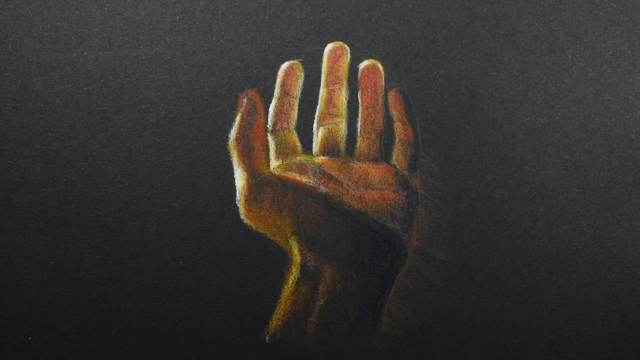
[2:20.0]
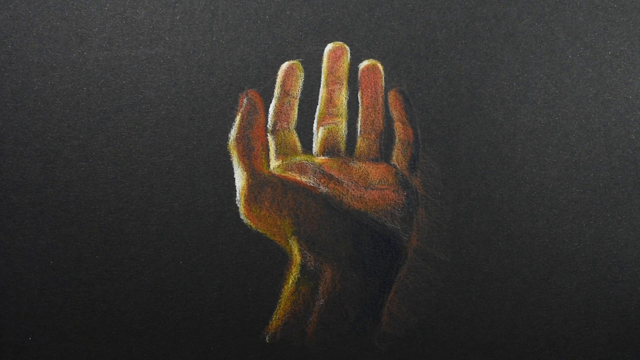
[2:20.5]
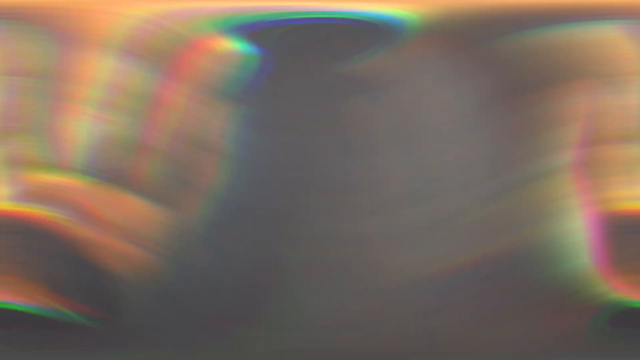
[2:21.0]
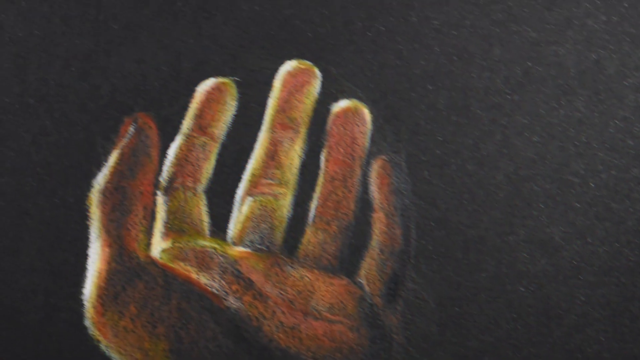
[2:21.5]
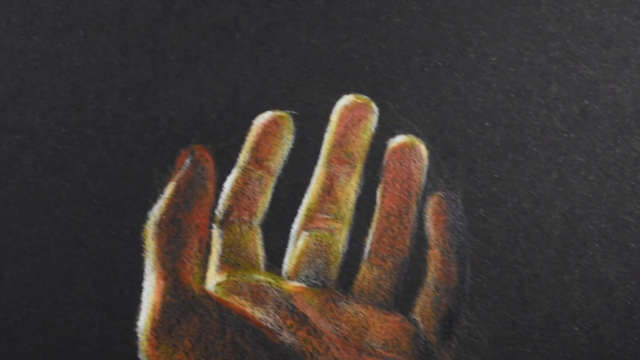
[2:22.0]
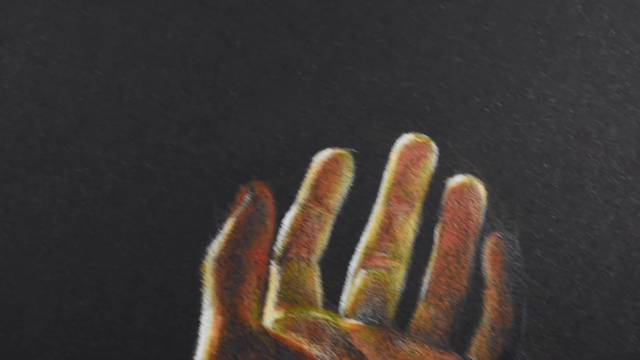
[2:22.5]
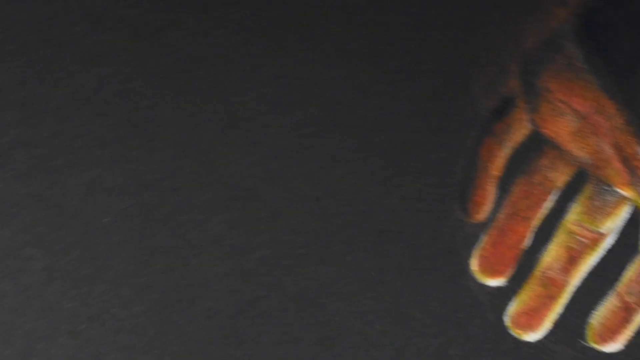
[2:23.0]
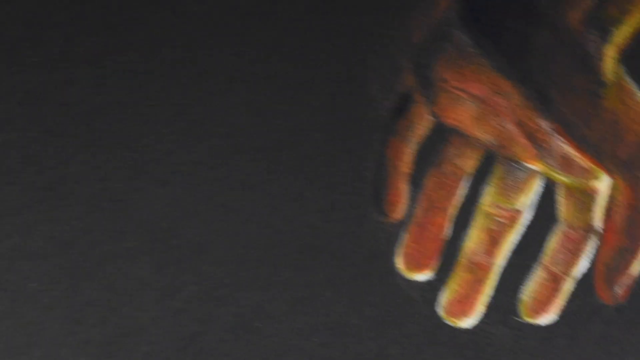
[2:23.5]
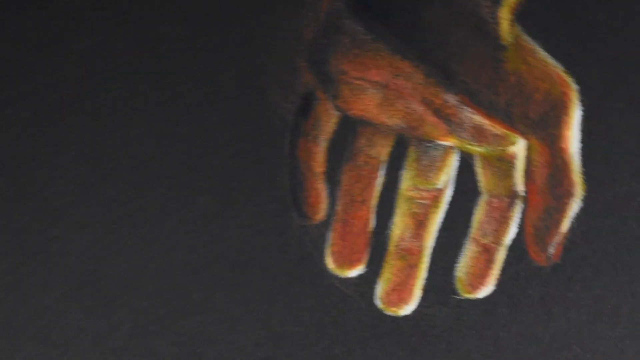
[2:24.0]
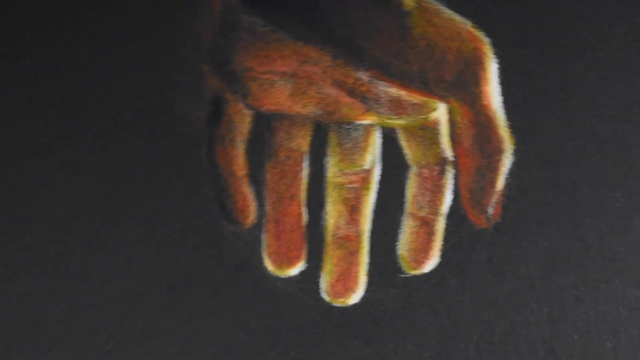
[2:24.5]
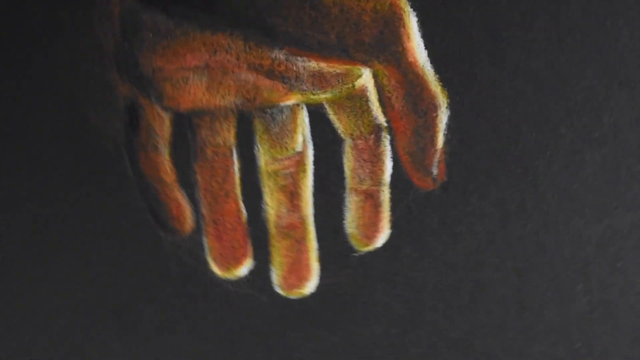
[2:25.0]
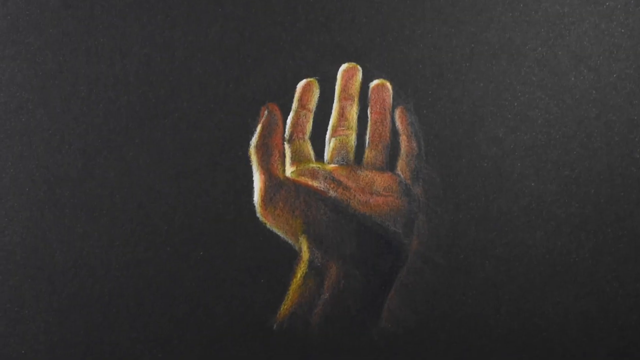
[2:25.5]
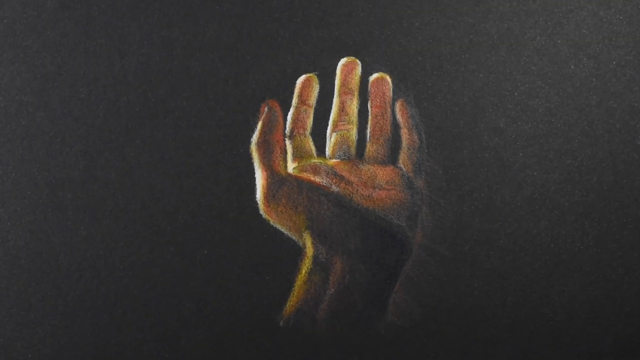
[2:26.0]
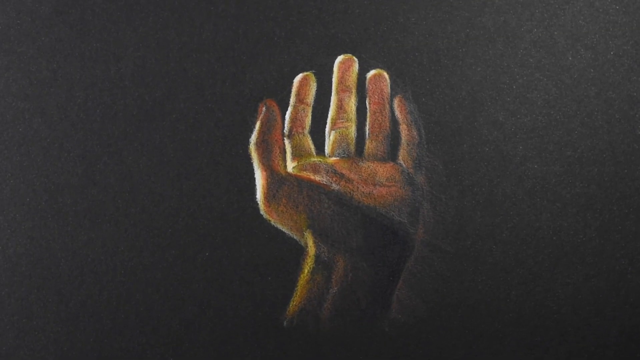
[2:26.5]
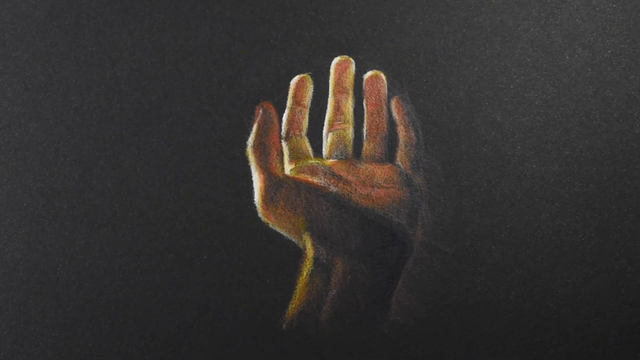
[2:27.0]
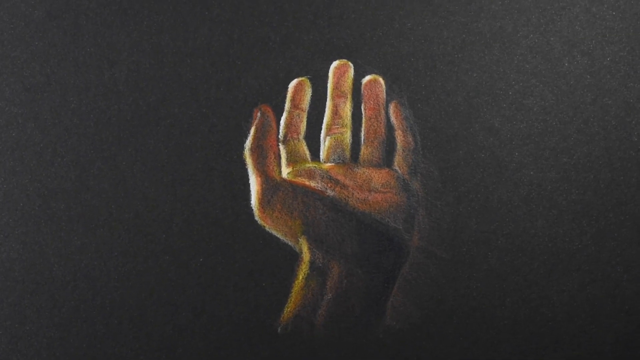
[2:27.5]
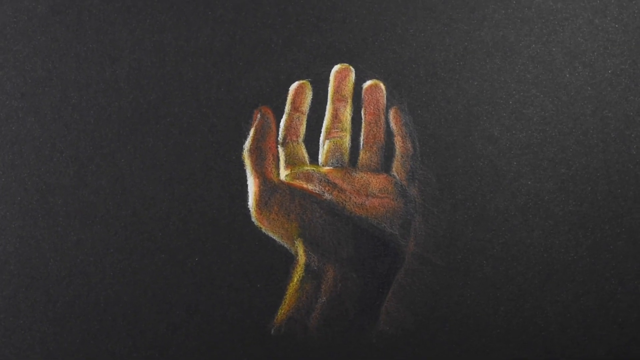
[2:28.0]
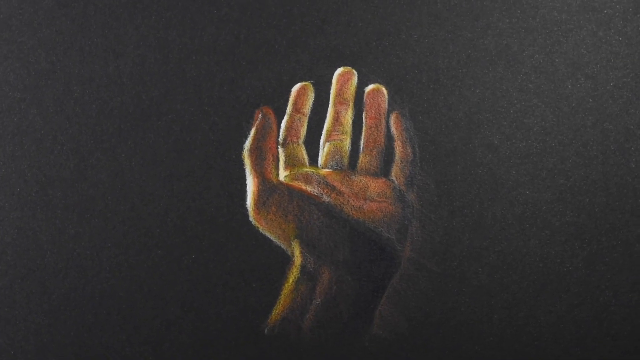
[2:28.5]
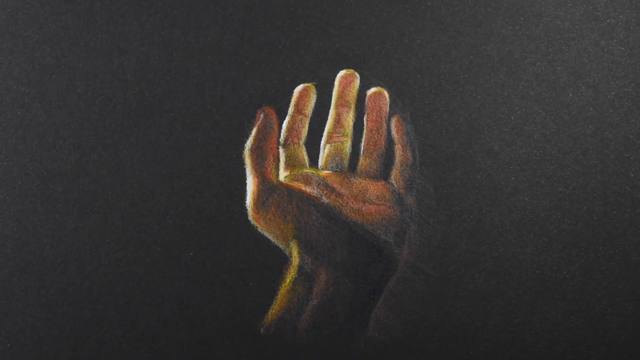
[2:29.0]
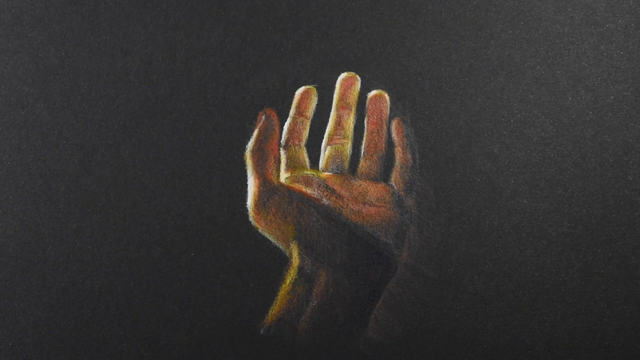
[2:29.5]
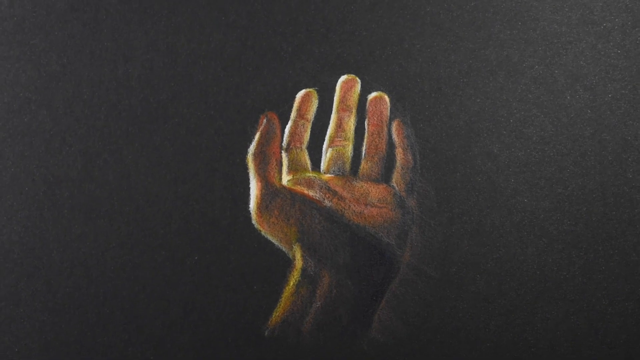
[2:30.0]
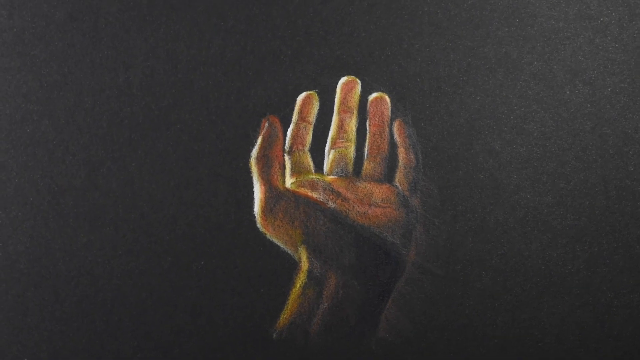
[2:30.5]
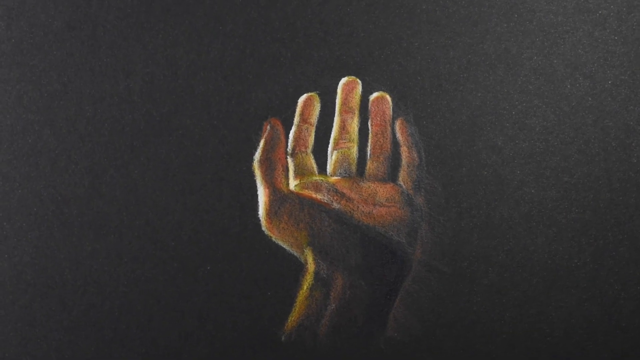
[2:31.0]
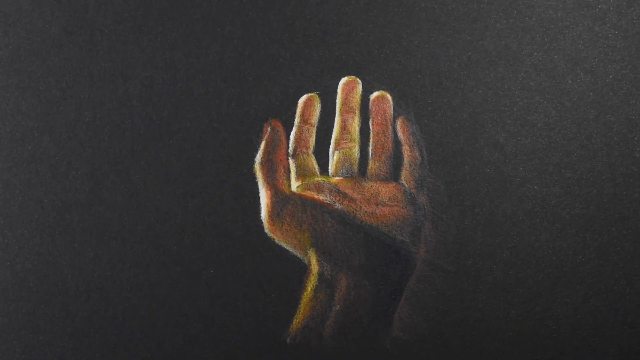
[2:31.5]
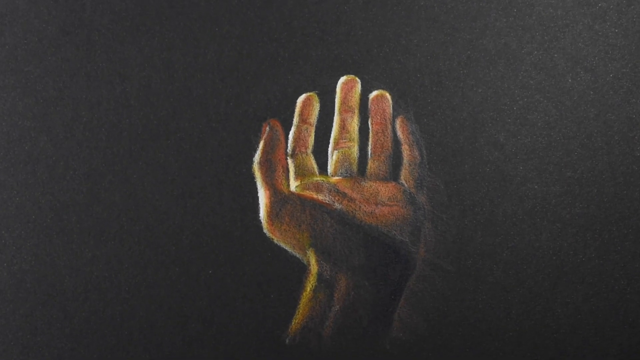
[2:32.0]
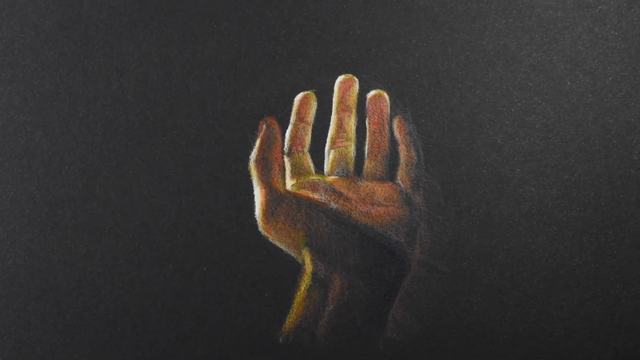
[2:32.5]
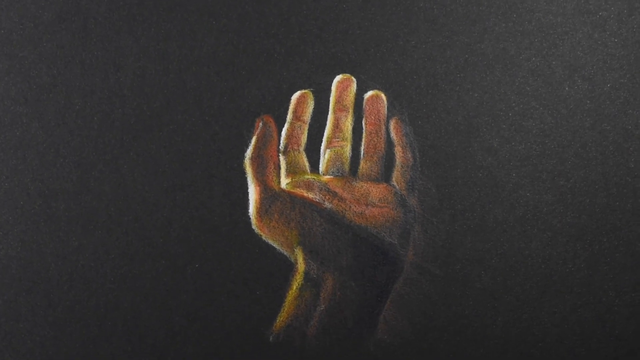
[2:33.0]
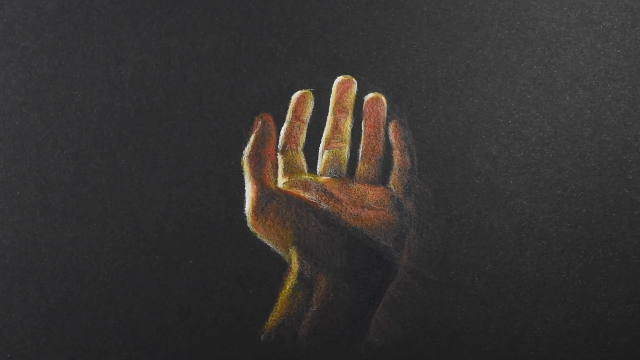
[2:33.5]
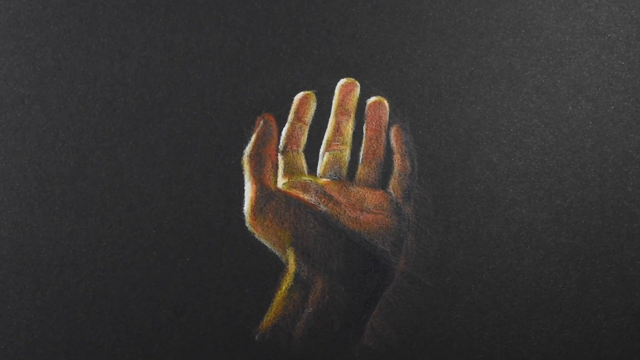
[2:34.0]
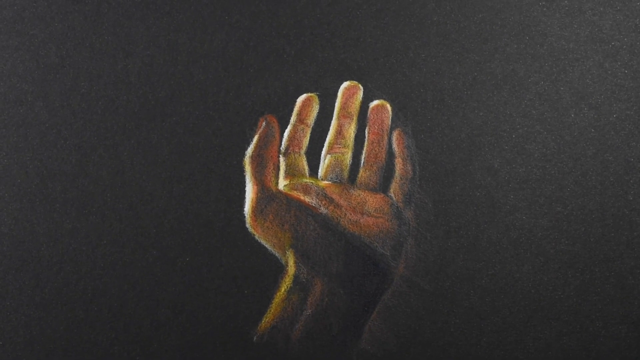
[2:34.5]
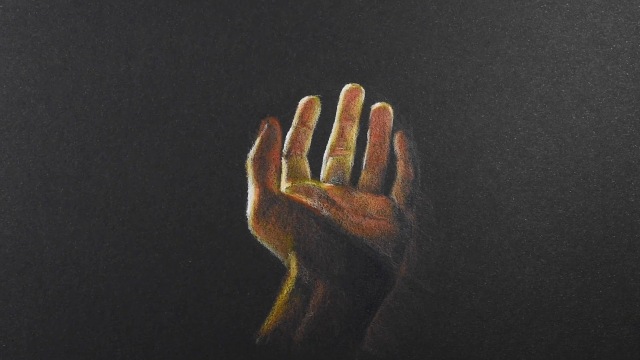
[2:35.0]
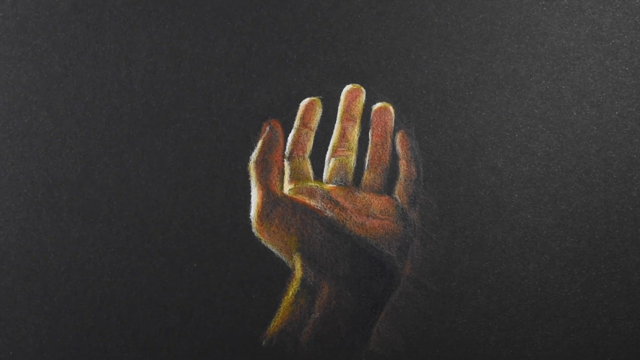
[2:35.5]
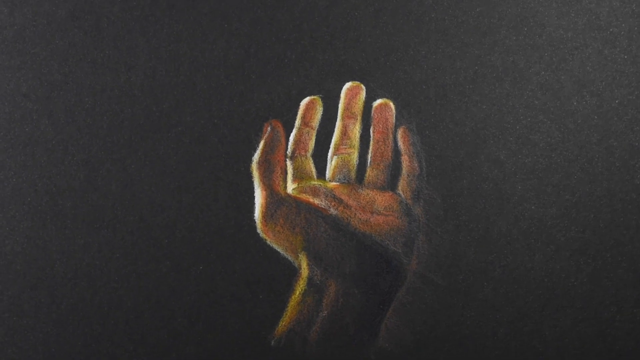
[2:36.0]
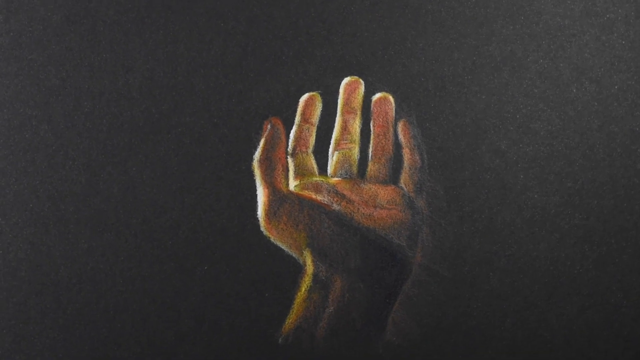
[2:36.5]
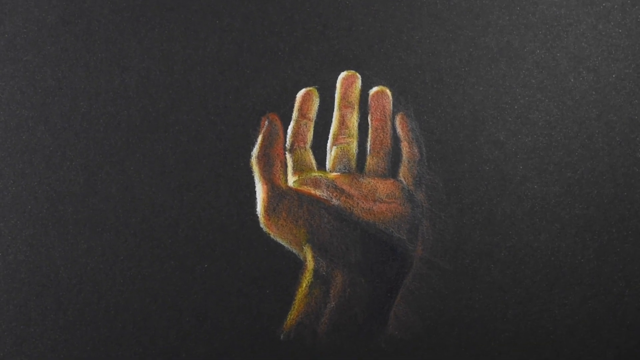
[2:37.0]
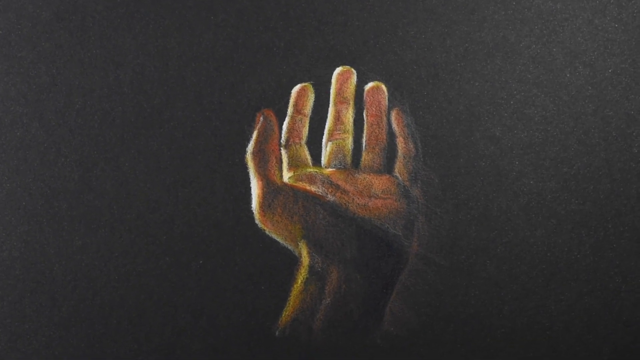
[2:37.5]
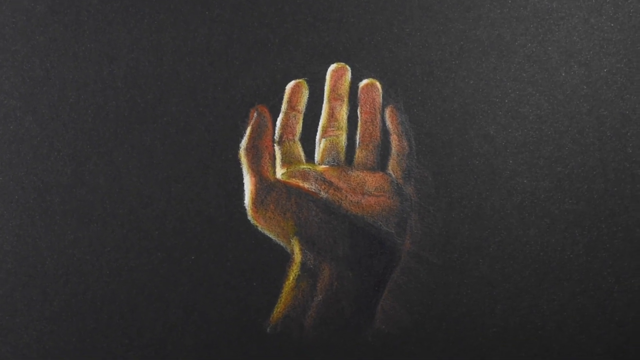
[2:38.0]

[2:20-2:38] A man holds a feather pencil. Before picking it up, he lights four candles on a flat glass table. He writes a quote on the black cover of the book that comes out in white writing, which cannot be read, and signs the end of it. He then draws a hand, of which only the outline is visible at first. He uses more colours, such as orange and lighter shades of orange, to fill in the details of the drawing, and the hand gradually becomes clearer. The man appears to be an artist, as he is very good at drawing.